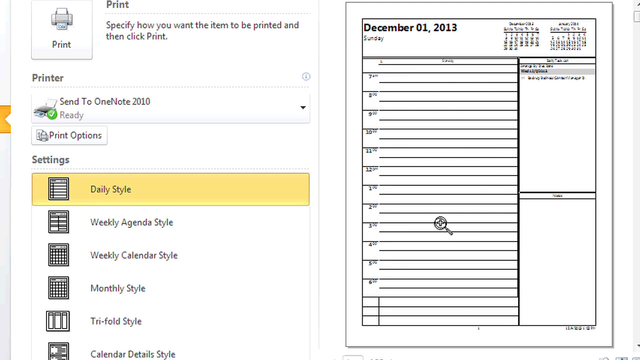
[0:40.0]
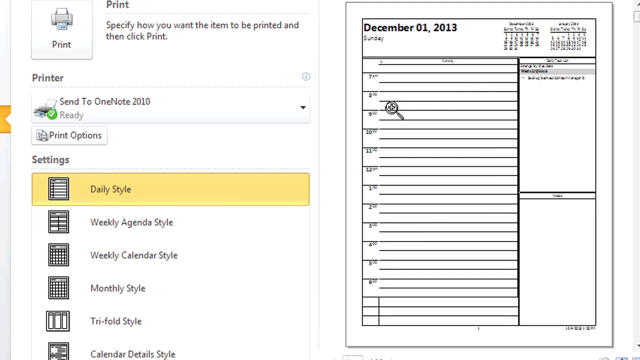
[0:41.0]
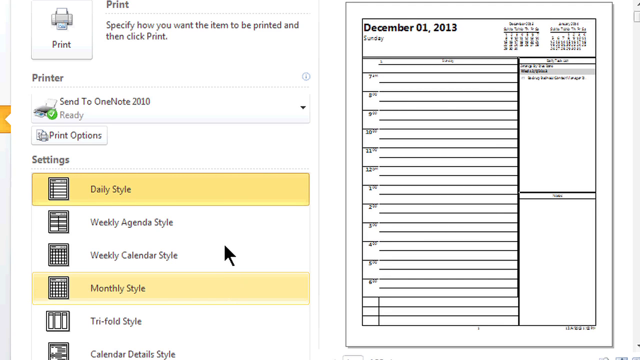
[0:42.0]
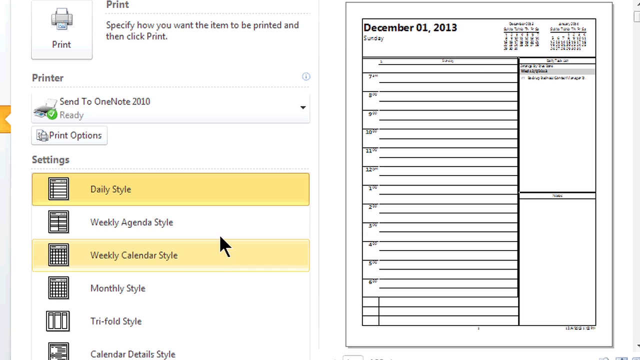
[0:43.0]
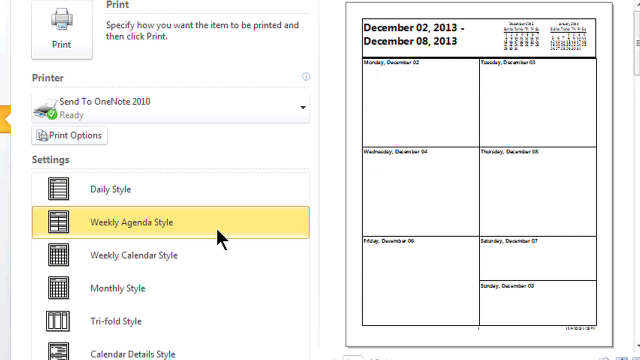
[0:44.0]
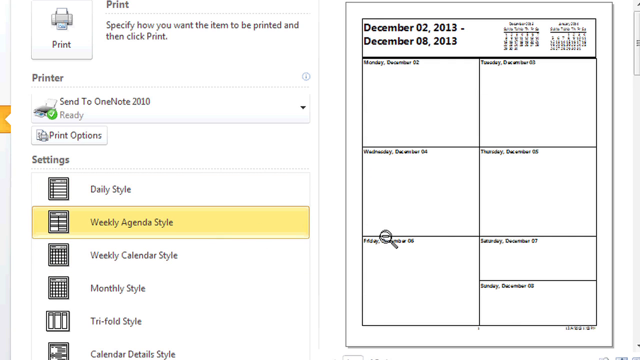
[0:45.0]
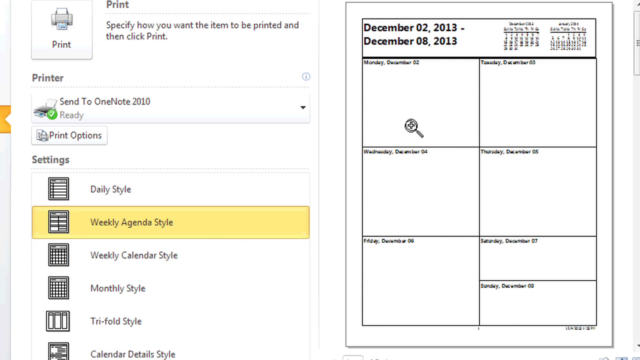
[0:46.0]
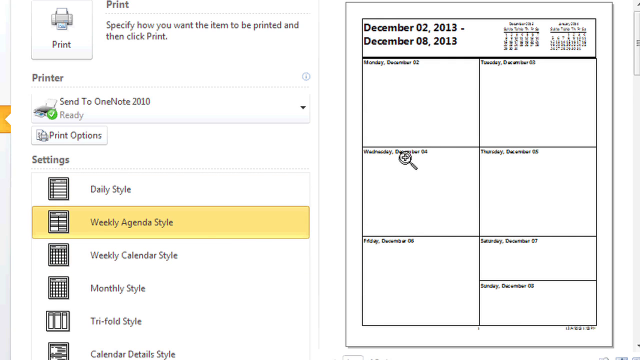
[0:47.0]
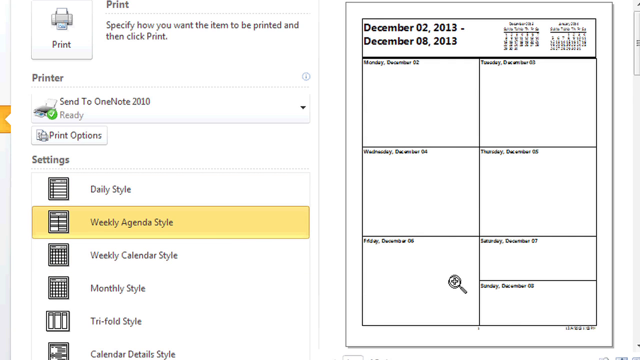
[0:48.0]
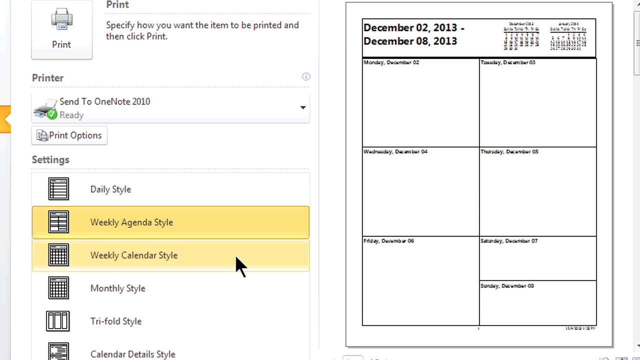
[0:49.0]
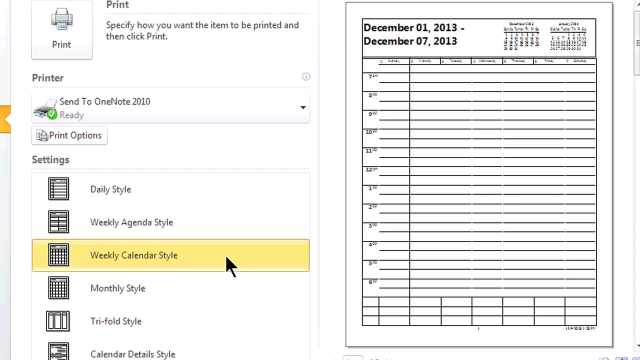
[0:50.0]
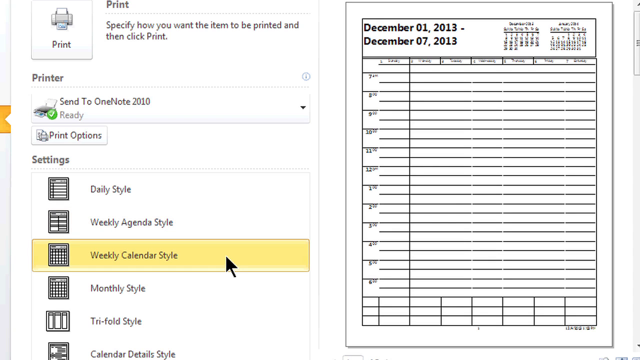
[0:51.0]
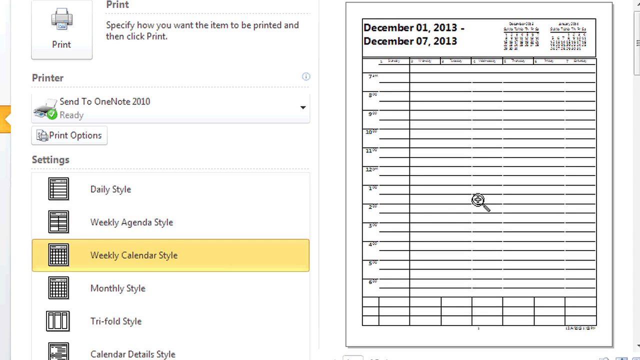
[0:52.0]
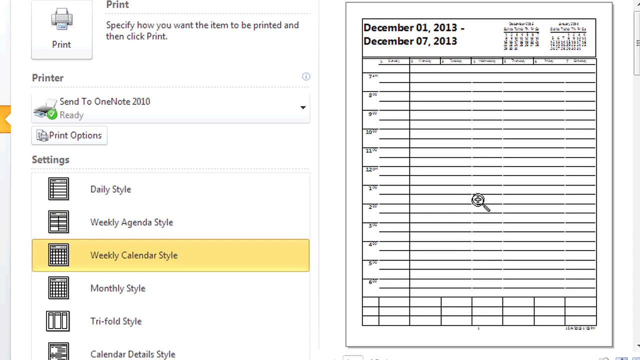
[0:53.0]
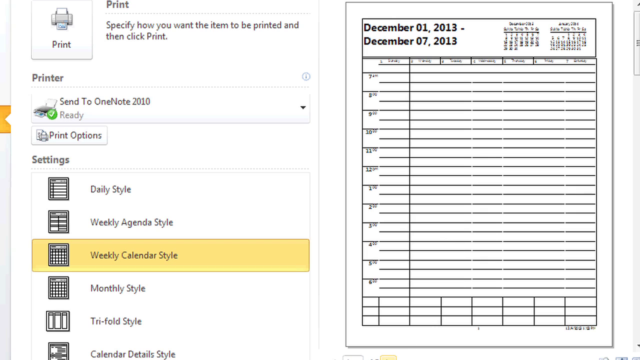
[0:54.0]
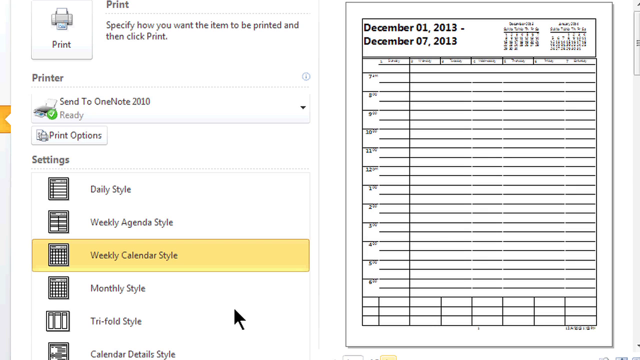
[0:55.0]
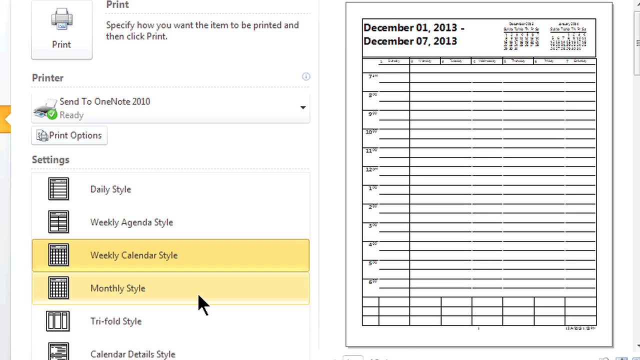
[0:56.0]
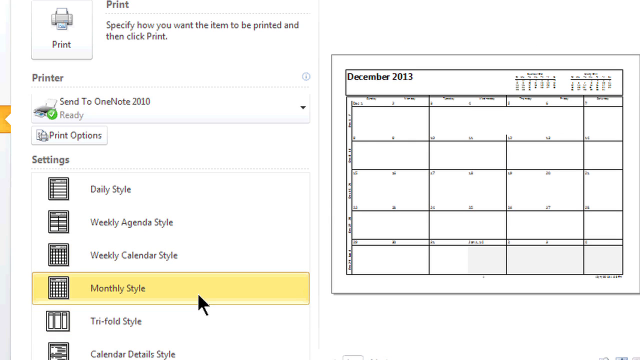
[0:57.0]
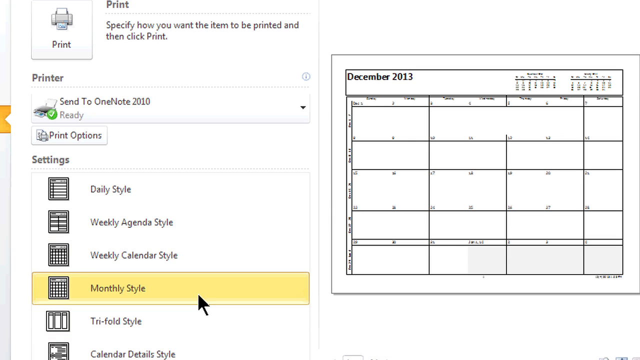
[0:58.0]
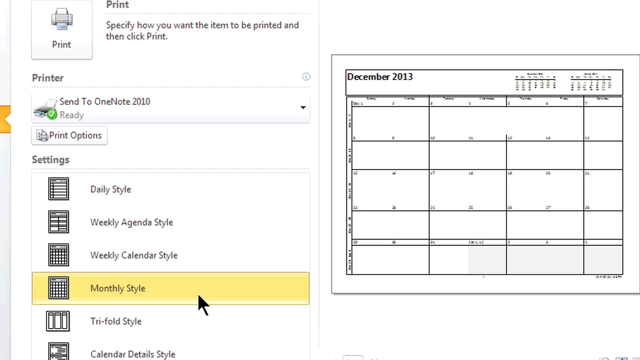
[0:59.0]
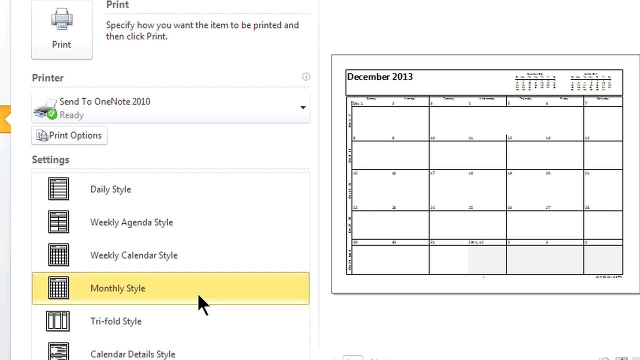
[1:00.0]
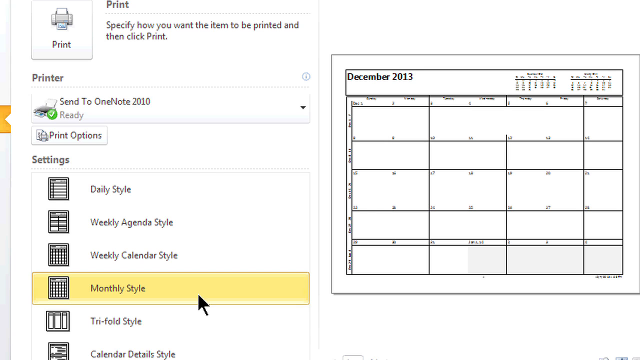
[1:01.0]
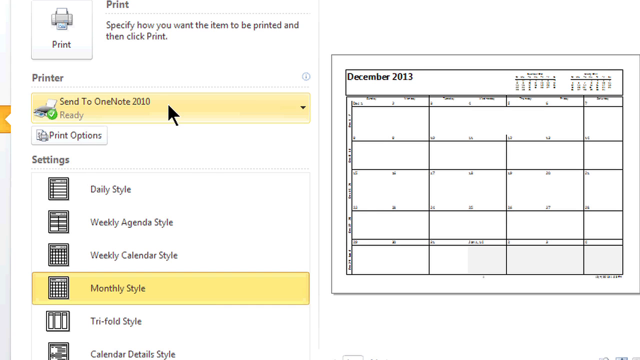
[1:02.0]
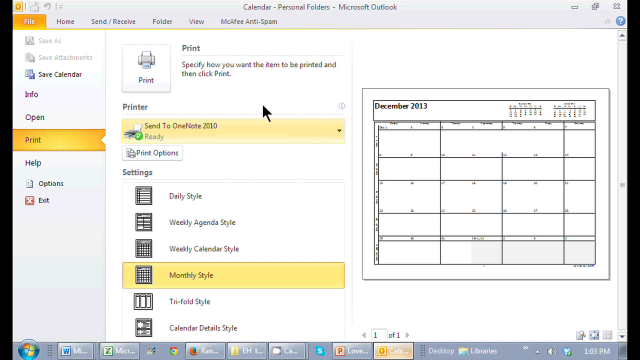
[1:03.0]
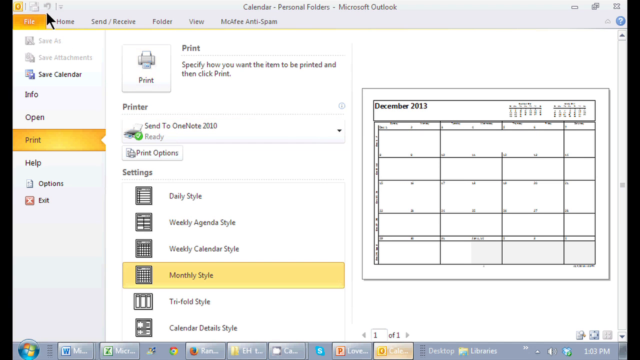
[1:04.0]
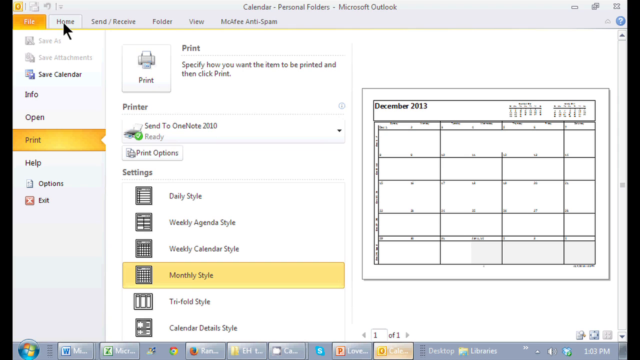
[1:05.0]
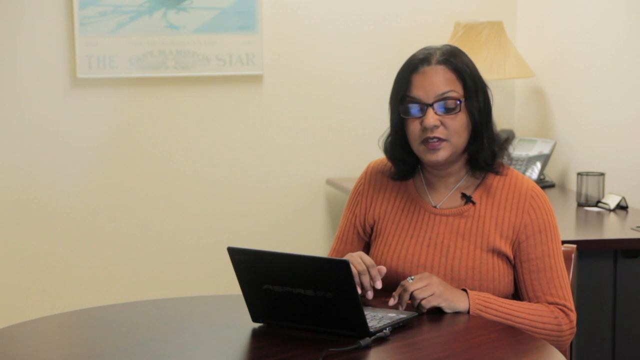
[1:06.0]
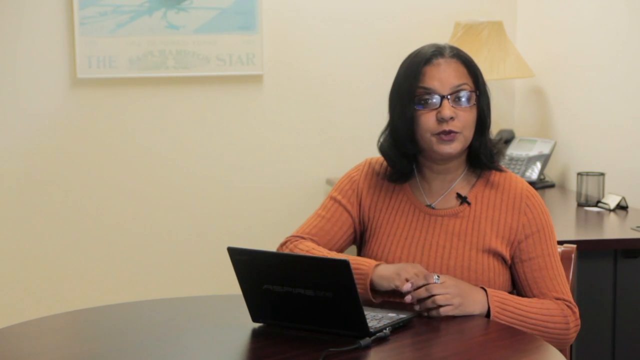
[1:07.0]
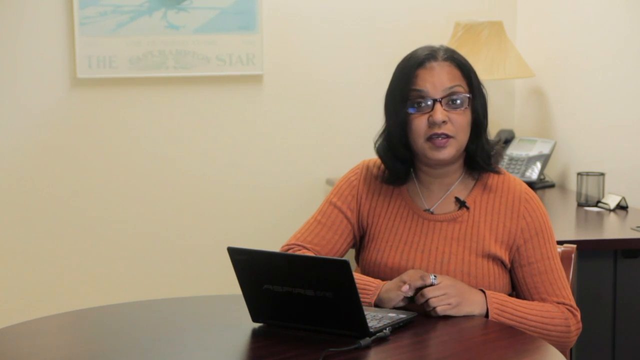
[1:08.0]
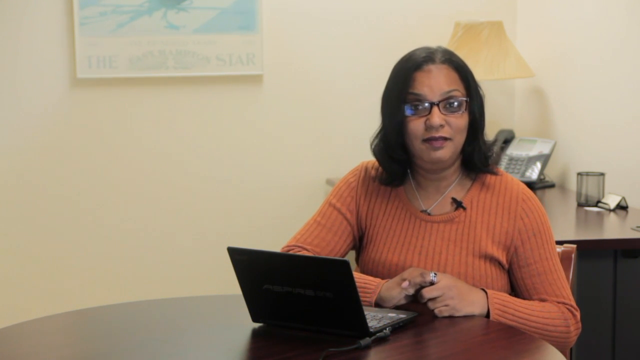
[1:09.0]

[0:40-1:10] The print section of the application is on screen. At the top left, the word "print" is inside a small square box with a little printer icon above it. To the right is the word "print" again, with "specify how you want the item to be printed" below it. Lower down on the left is the word "printer," and below that a rectangular box with a drop-down arrow that reads "send to OneNote 2010." Underneath is a green check mark with the word "ready." Further down it says "settings," with several style options: the currently selected "daily style," highlighted in a yellowish background, plus "weekly agenda style," "weekly calendar style," and "monthly style." On the right is a small image of the daily style calendar for December 1st, 2013. The mouse cursor clicks the weekly agenda style, which changes the image on the right to December 2nd to the 8th. The weekly calendar style is selected next, changing the image on the right, and then the monthly style, which shows the full month of December 2013 on the right. The person zooms out and clicks the home bar in the application before the video returns to the woman.